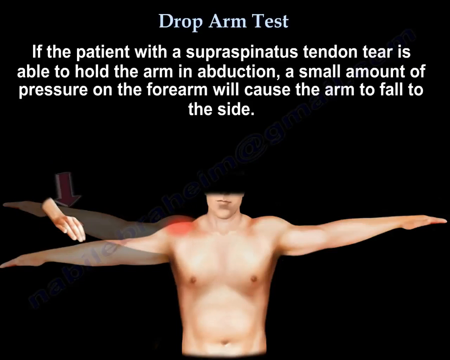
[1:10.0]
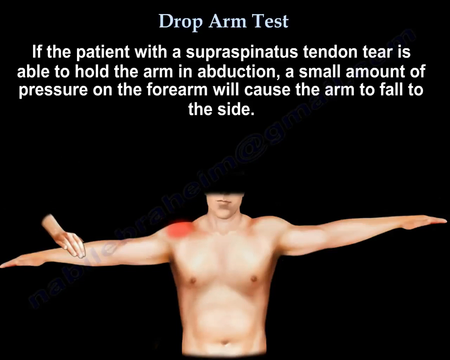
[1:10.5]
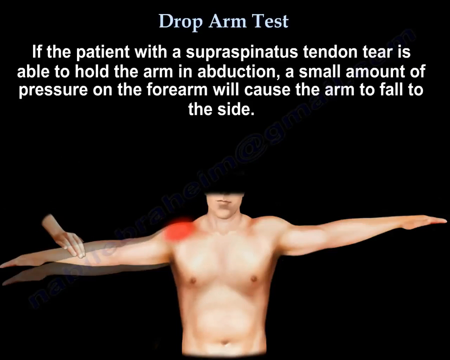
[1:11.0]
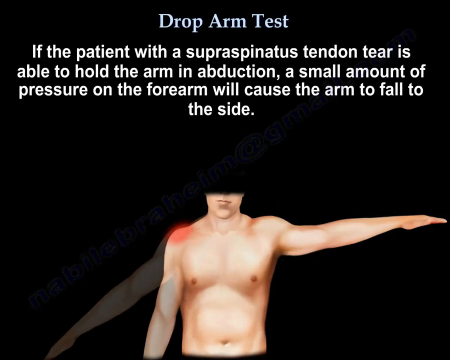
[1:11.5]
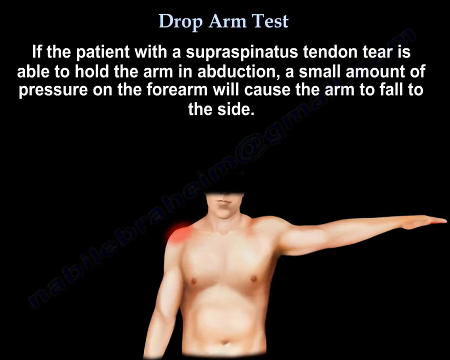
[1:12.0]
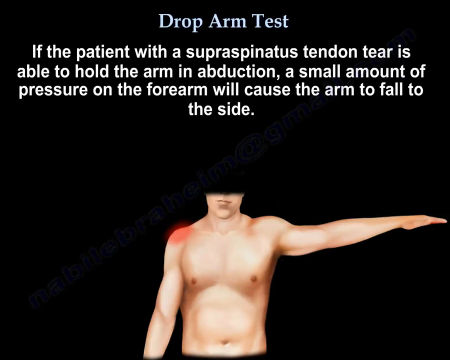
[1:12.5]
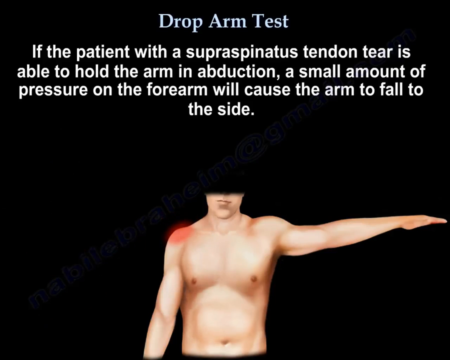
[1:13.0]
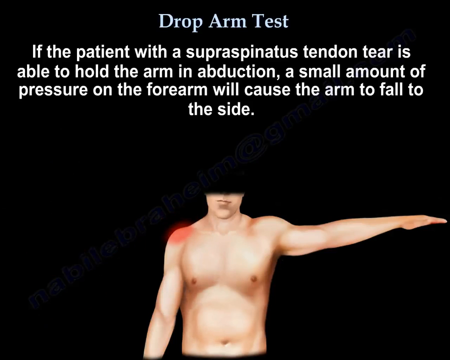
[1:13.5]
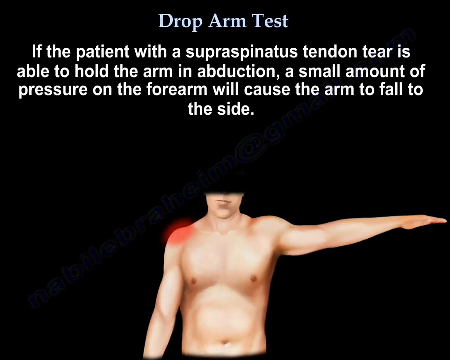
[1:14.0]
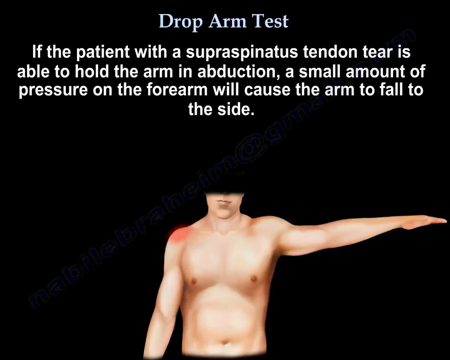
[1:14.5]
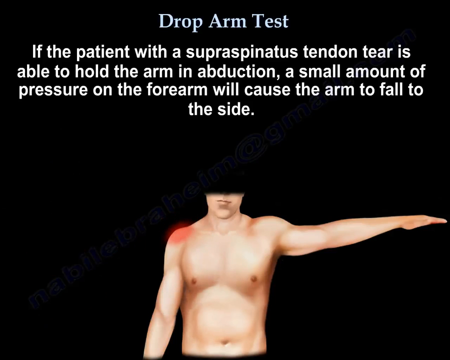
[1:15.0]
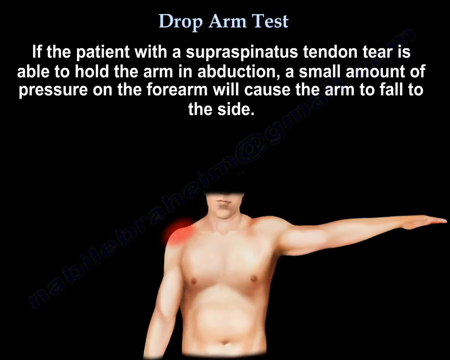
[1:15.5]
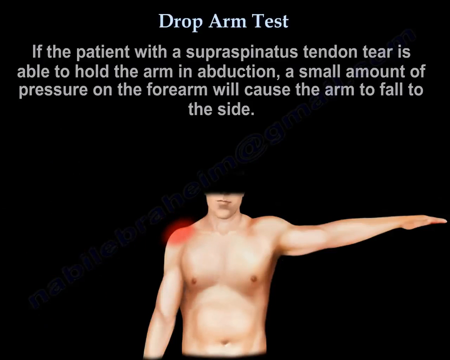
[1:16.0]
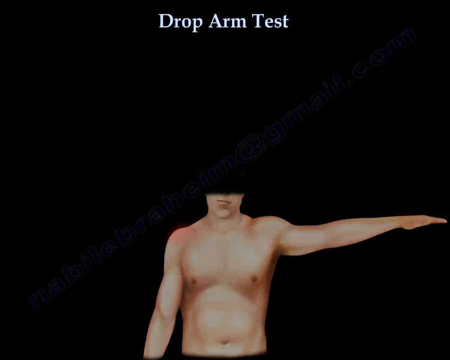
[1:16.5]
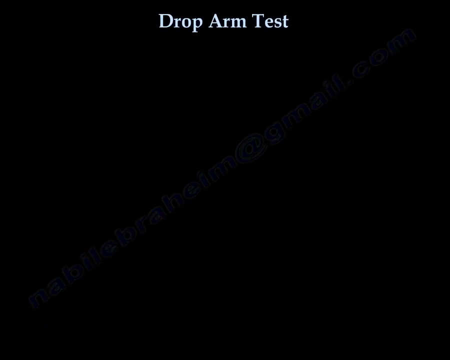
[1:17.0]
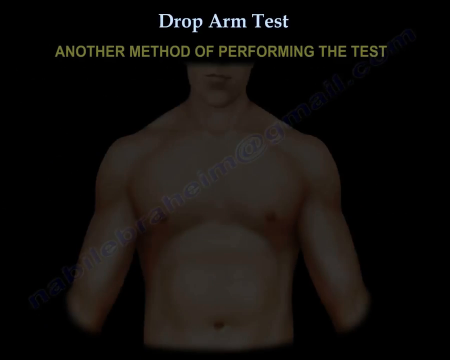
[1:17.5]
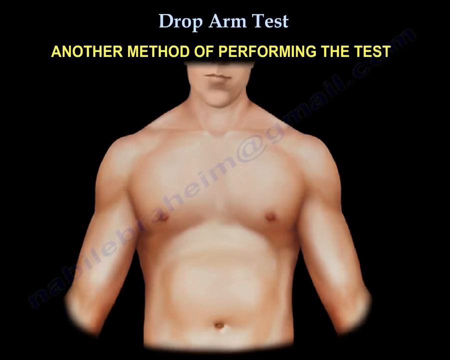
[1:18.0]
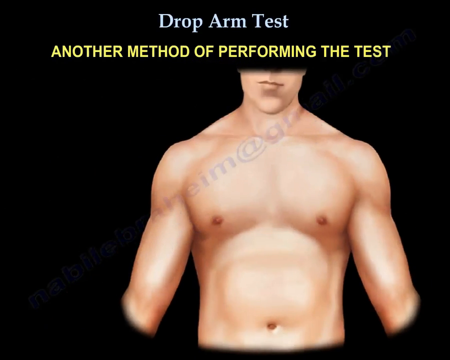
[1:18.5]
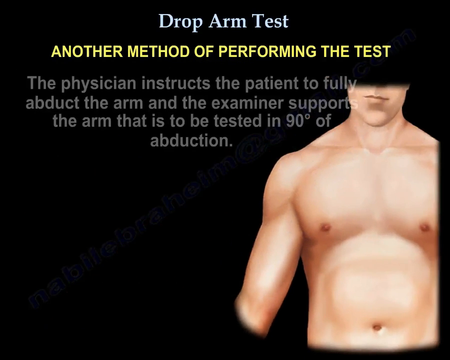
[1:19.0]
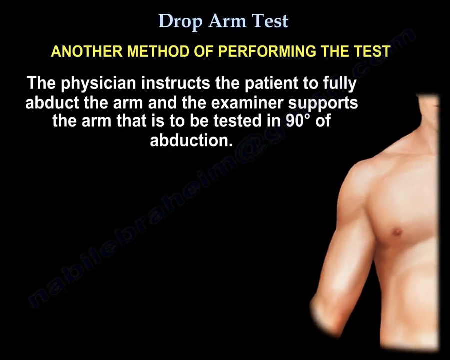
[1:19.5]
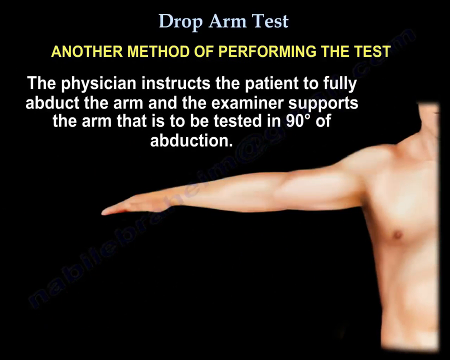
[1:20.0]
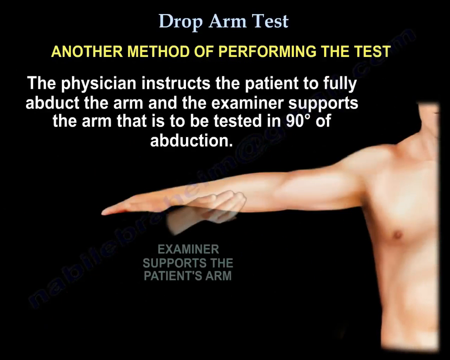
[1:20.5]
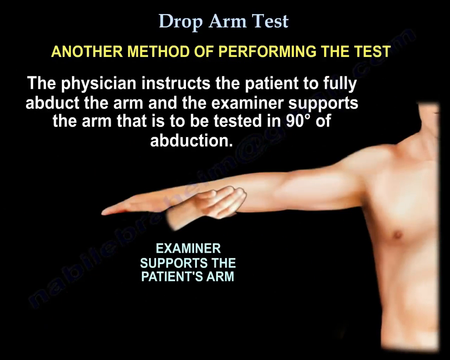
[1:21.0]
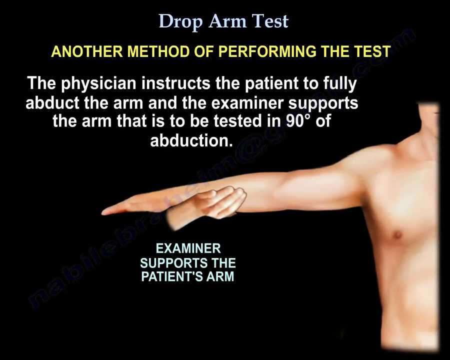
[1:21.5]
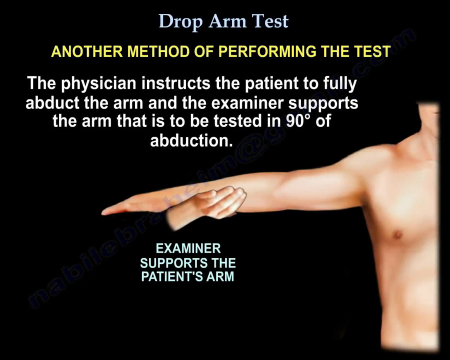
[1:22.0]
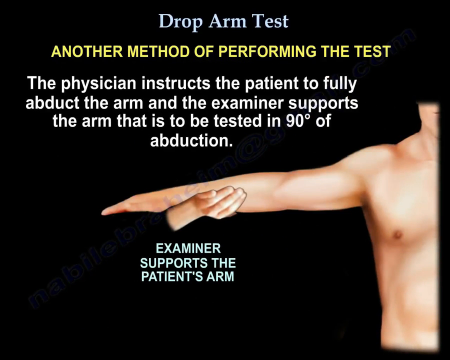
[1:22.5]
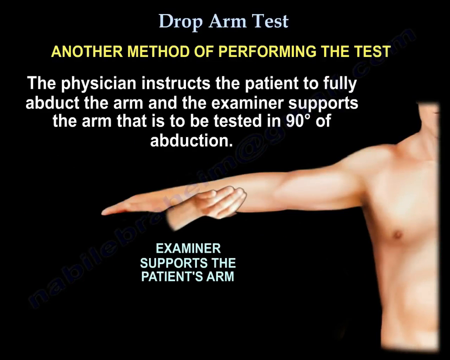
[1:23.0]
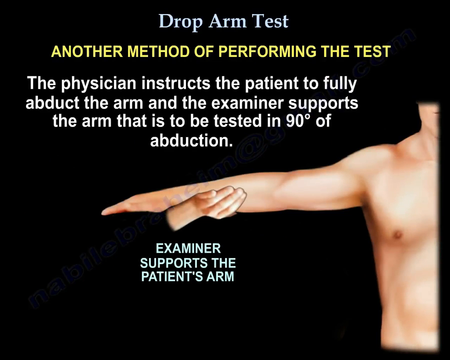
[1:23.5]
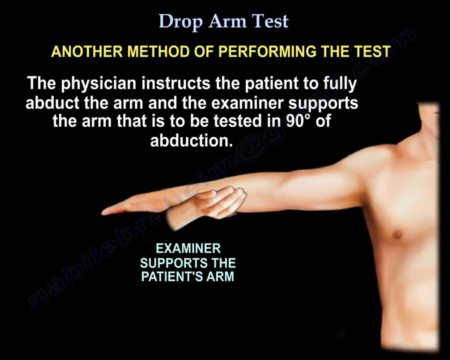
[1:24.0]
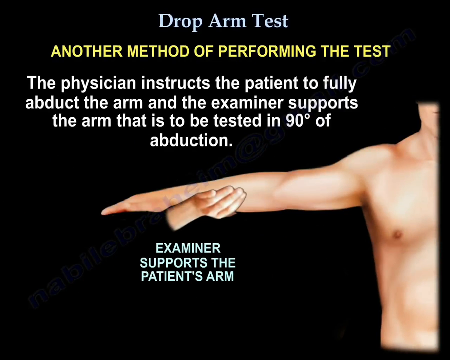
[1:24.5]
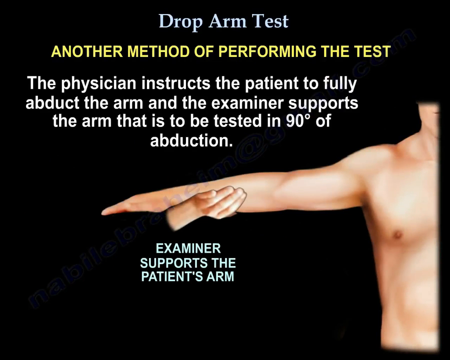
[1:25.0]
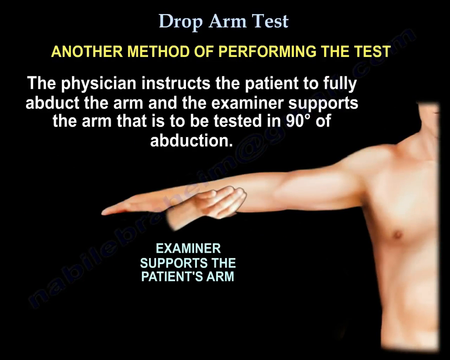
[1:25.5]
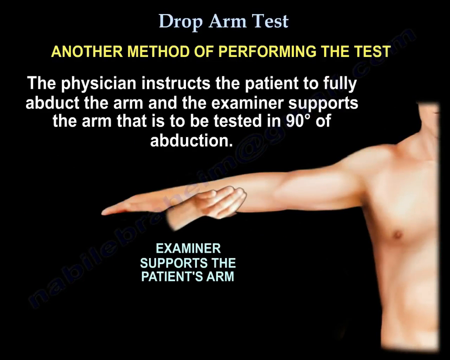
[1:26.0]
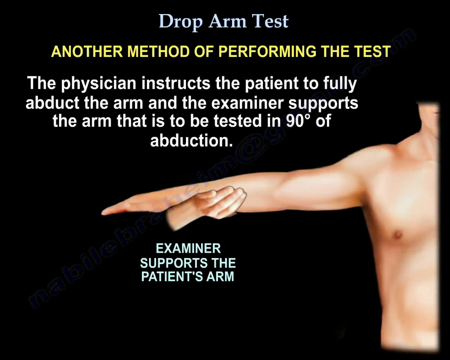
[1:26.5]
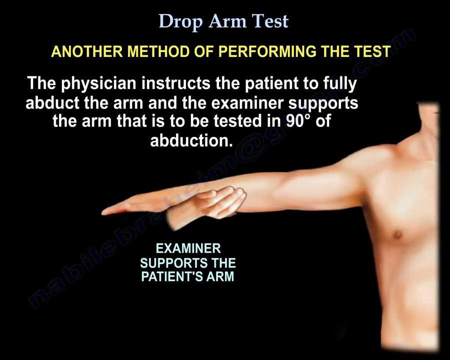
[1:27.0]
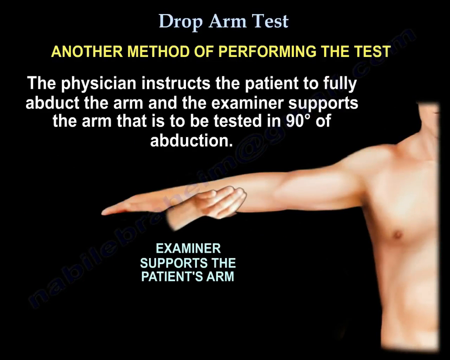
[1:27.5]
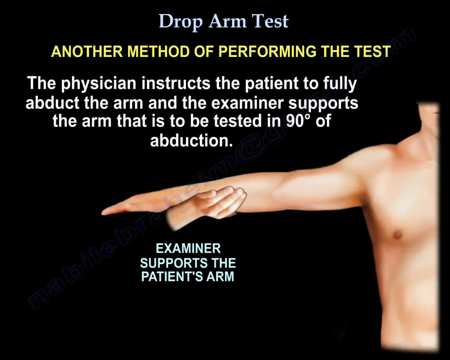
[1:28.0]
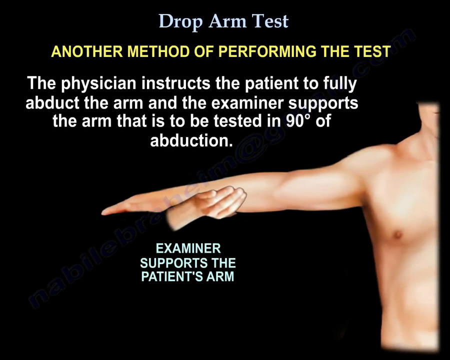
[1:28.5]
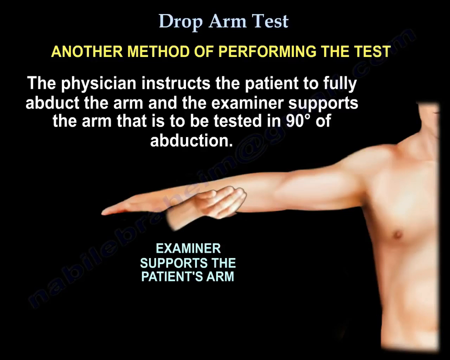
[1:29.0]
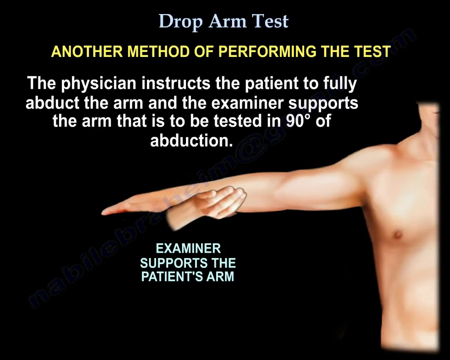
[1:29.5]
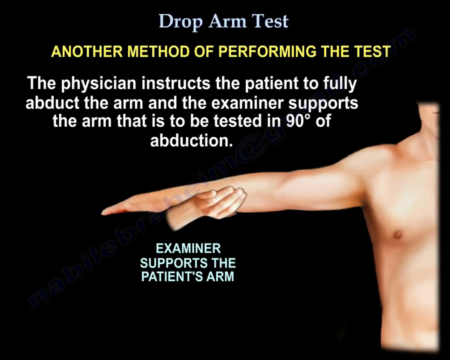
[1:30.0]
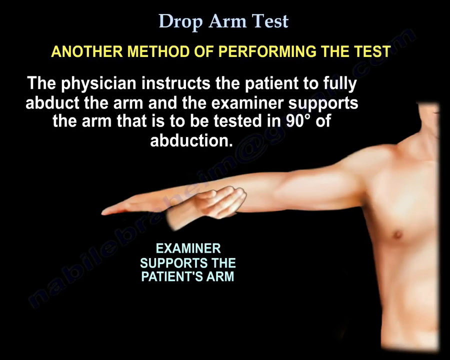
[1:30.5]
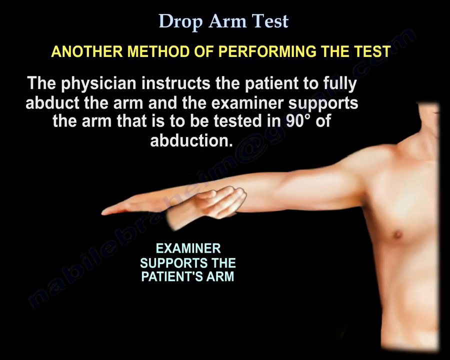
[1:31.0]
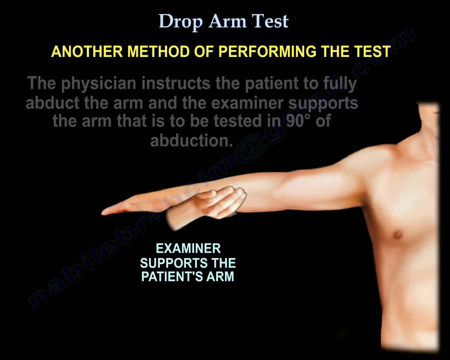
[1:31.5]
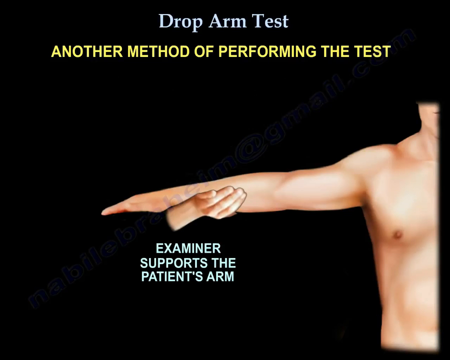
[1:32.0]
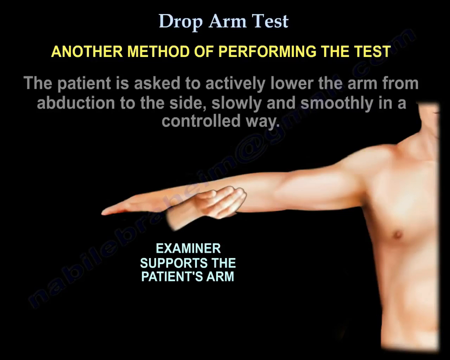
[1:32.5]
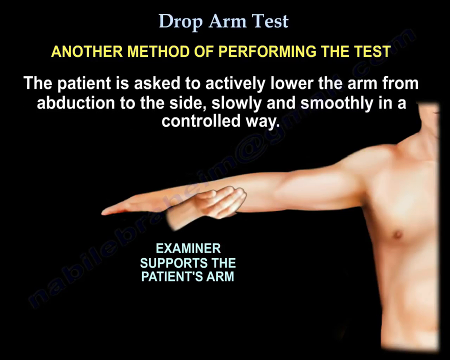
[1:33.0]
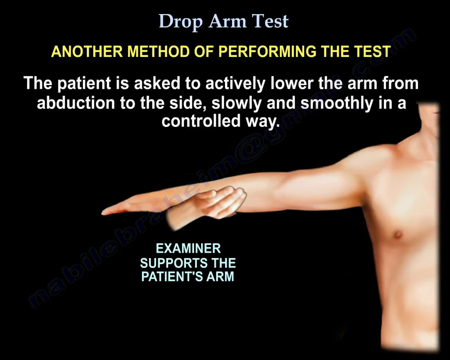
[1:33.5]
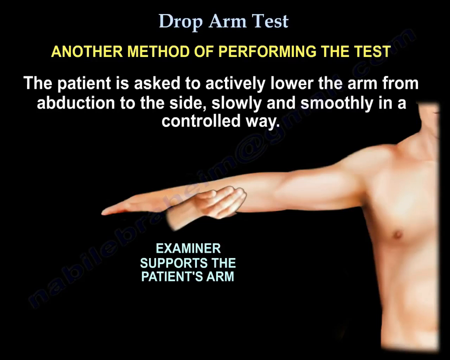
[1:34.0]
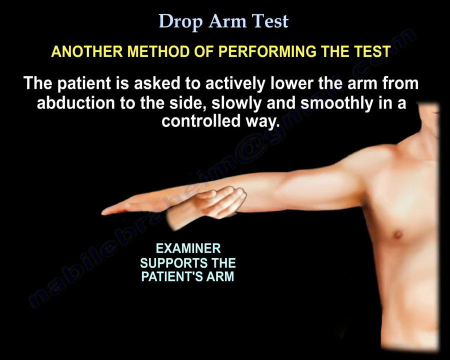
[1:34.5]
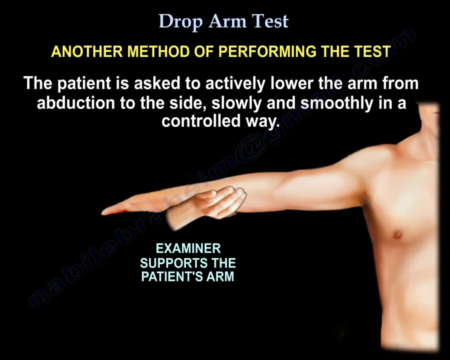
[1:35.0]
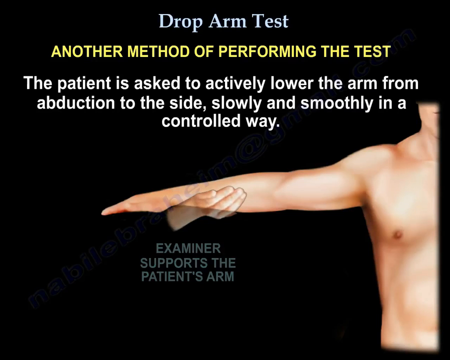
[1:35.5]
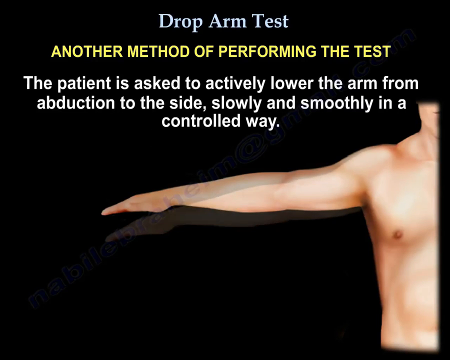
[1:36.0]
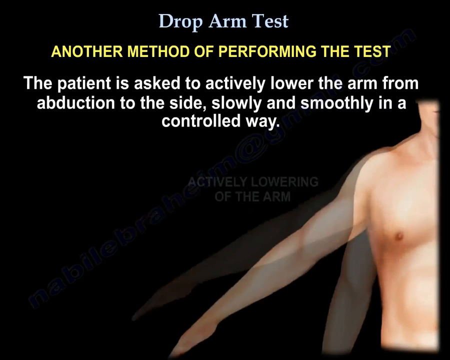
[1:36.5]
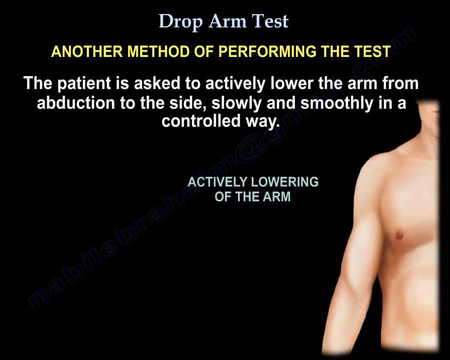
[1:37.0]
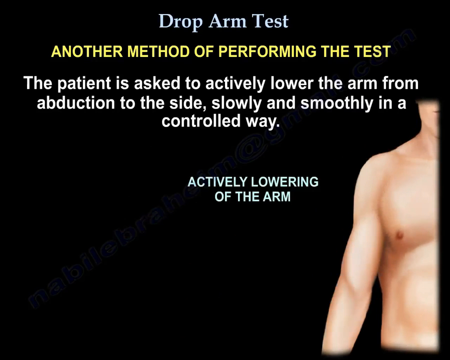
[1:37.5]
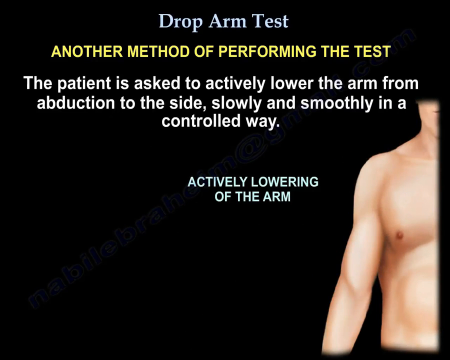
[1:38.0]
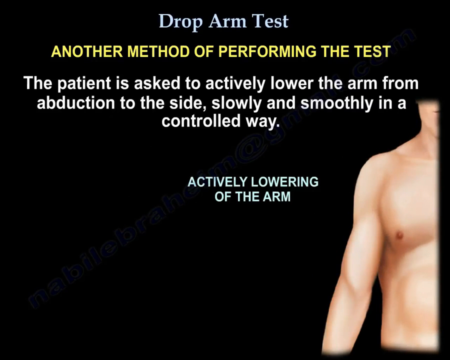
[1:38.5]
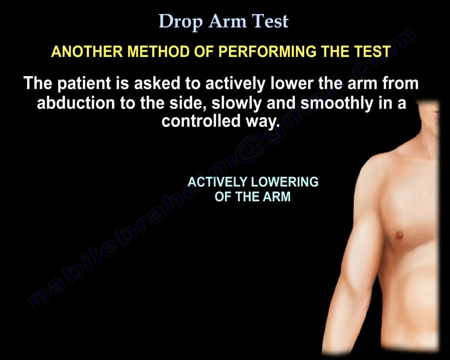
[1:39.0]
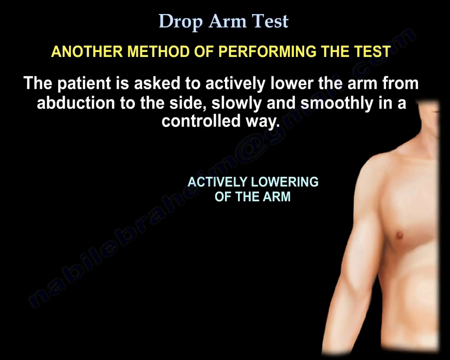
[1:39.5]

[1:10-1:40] In the animation, an animated hand pushes on the patient's forearm while the patient tries to resist, to see whether the arm falls to the side. As the arm goes down, red animation appears. Another method of performing the drop arm test is then shown: the physician instructs the patient to fully abduct the arm, and the examiner supports the arm being tested at 90 degrees of abduction, underneath the forearm. The patient is asked to actively lower the arm from abduction to the side, smoothly and in a controlled way, as the examiner holds the arm.